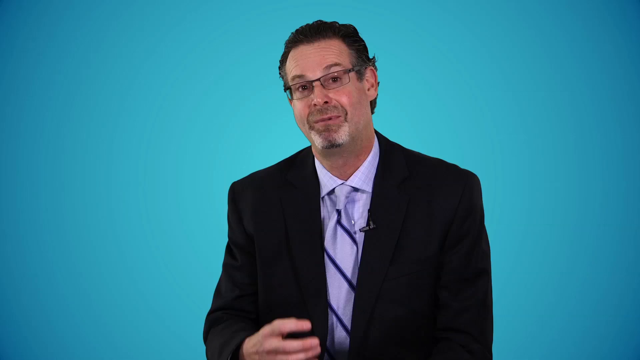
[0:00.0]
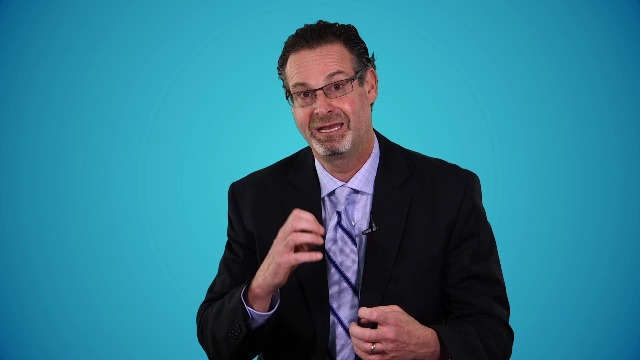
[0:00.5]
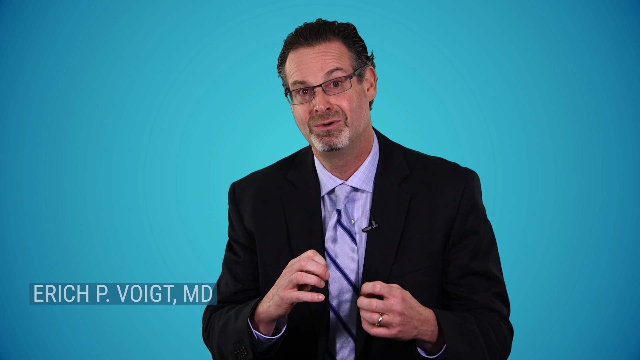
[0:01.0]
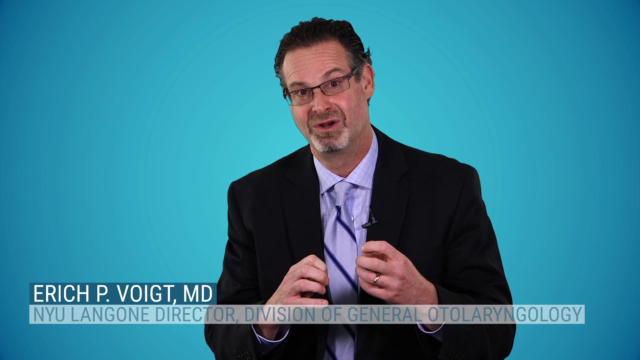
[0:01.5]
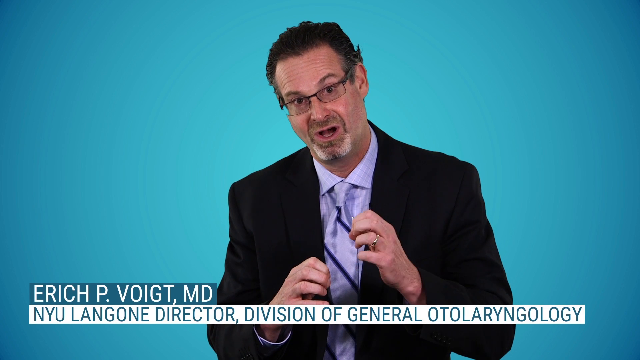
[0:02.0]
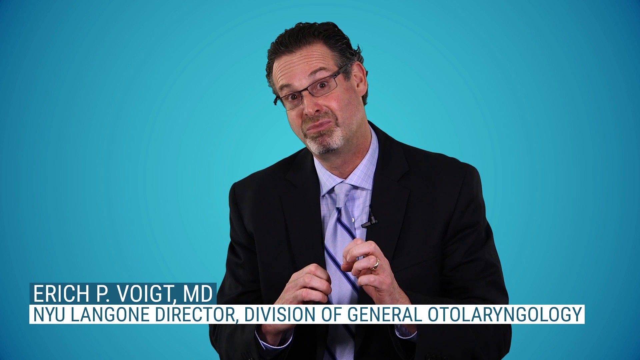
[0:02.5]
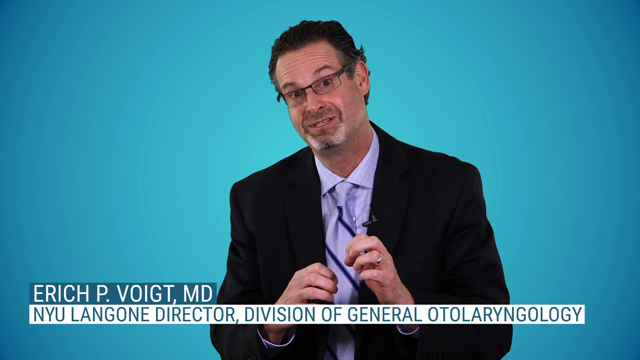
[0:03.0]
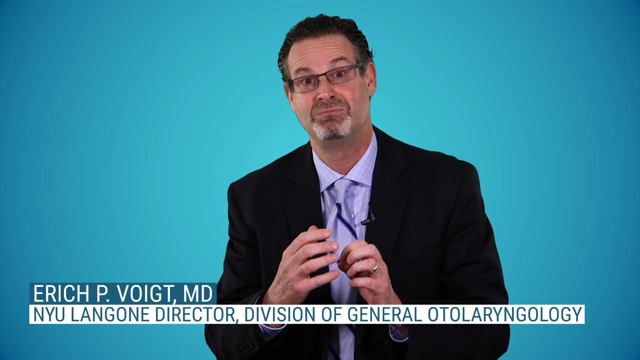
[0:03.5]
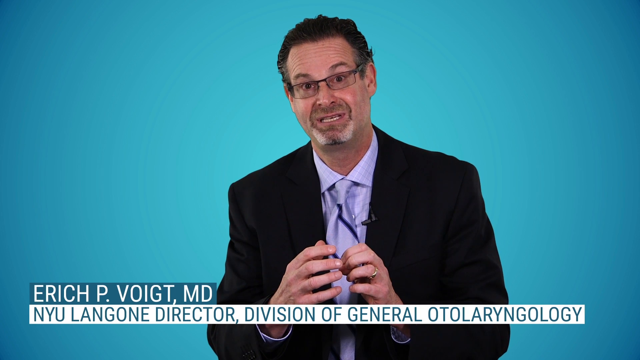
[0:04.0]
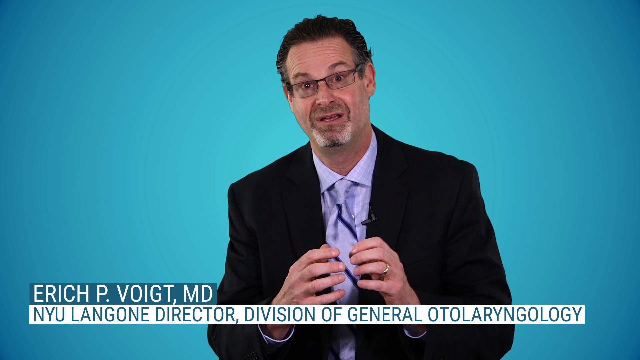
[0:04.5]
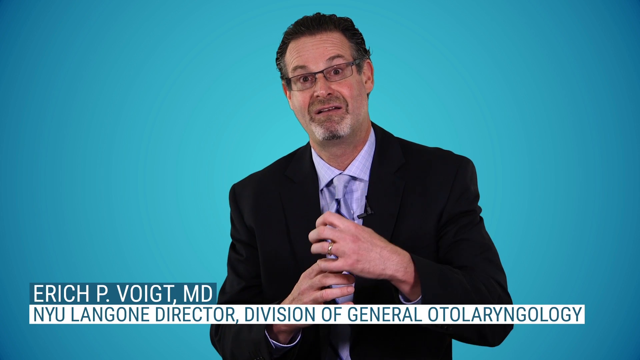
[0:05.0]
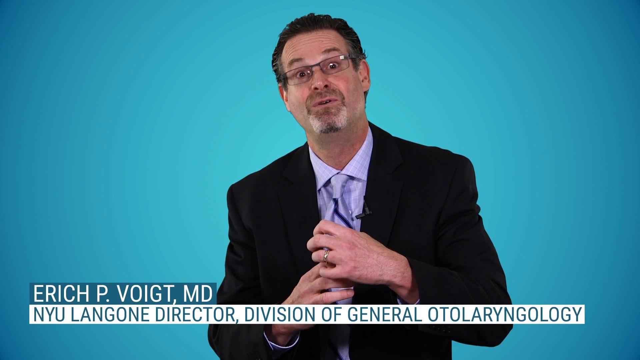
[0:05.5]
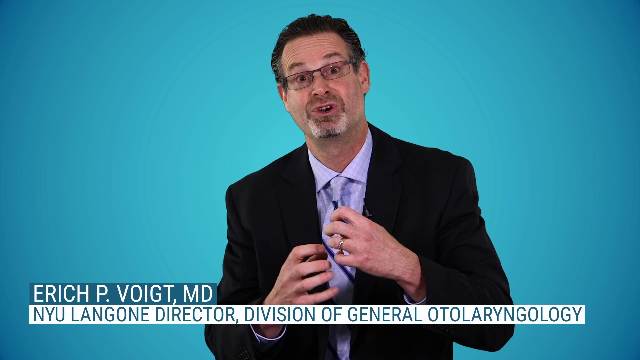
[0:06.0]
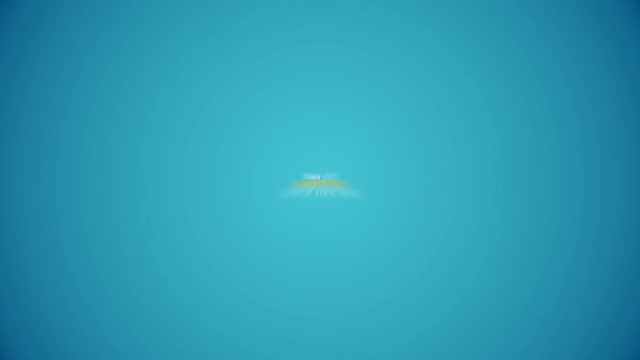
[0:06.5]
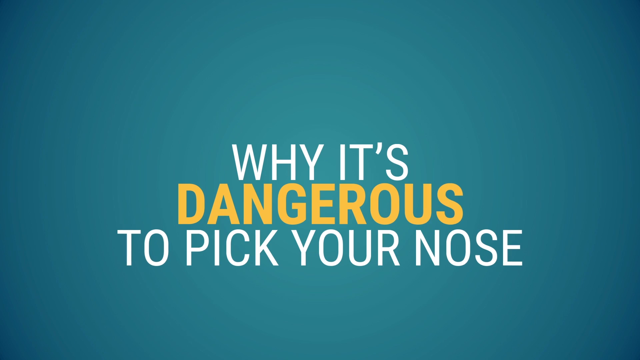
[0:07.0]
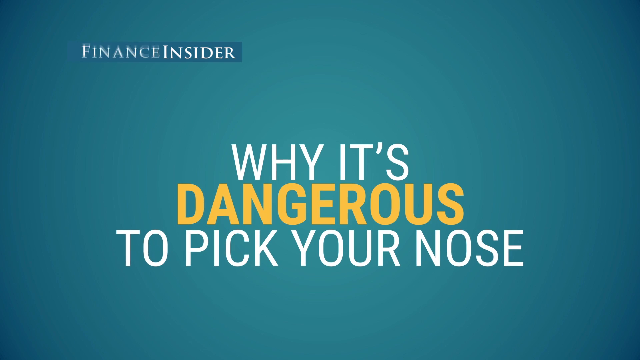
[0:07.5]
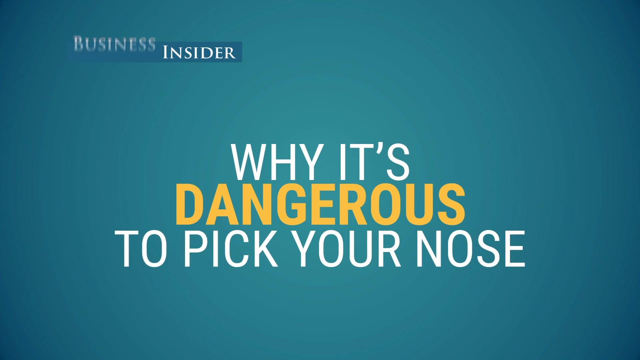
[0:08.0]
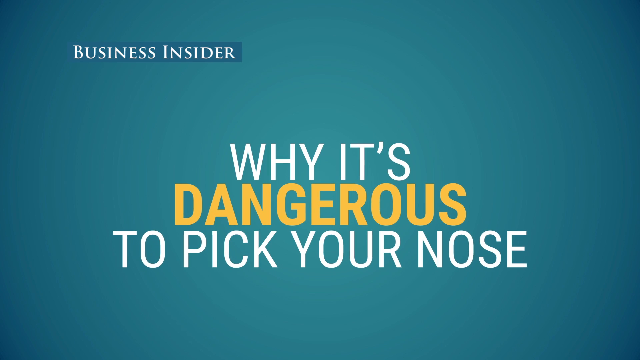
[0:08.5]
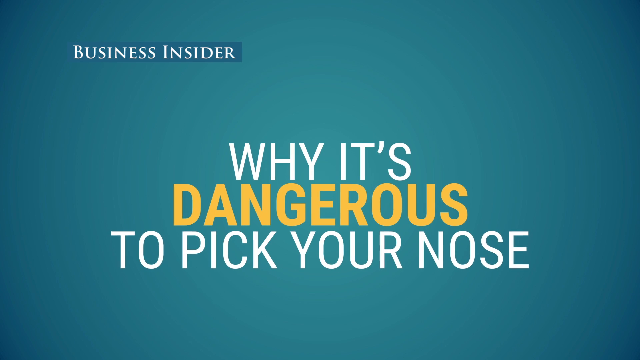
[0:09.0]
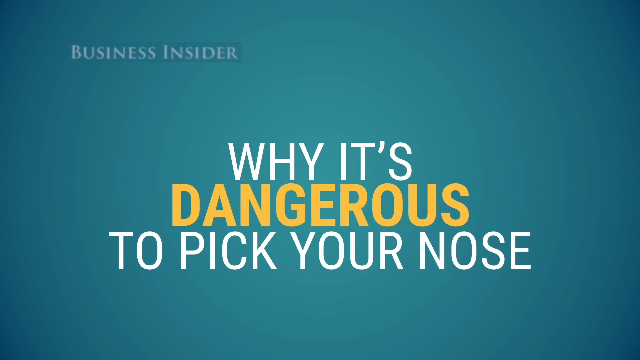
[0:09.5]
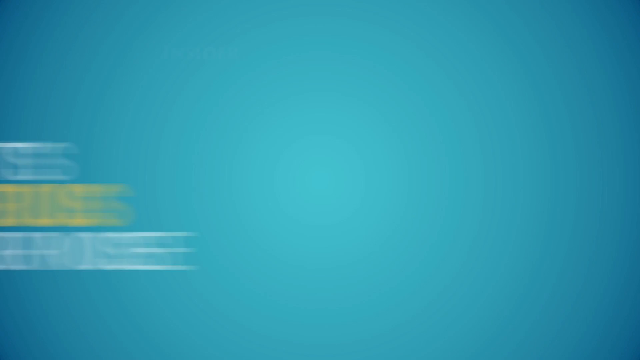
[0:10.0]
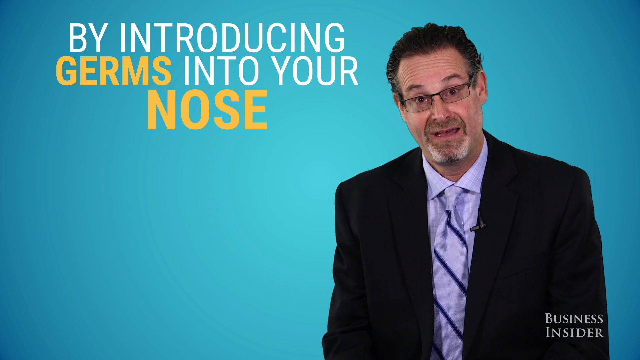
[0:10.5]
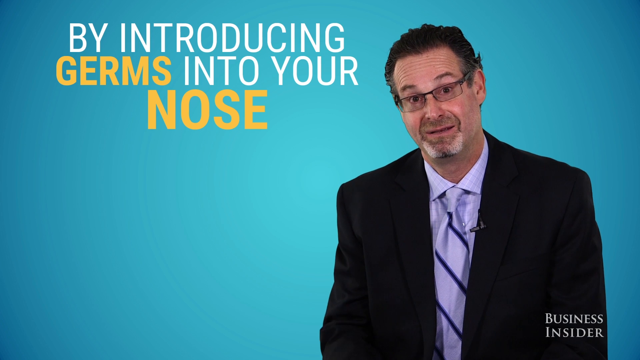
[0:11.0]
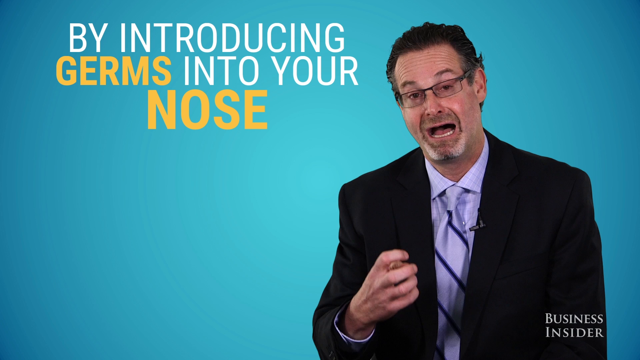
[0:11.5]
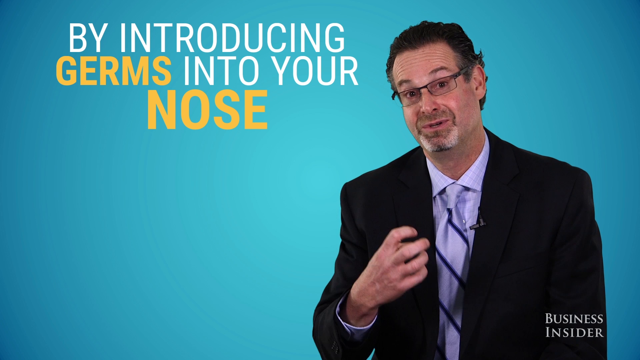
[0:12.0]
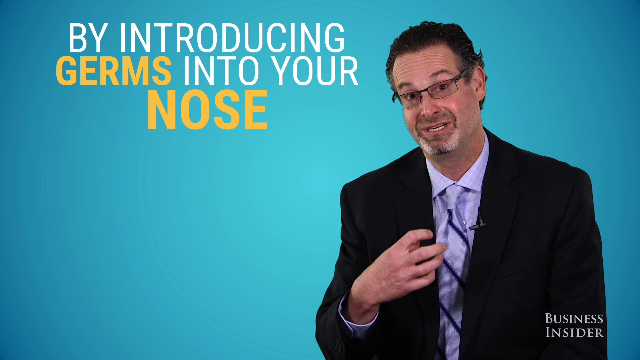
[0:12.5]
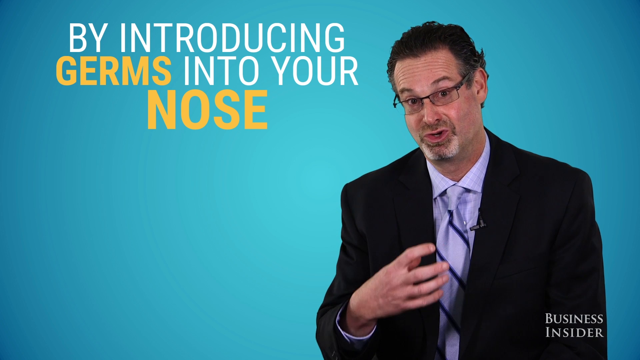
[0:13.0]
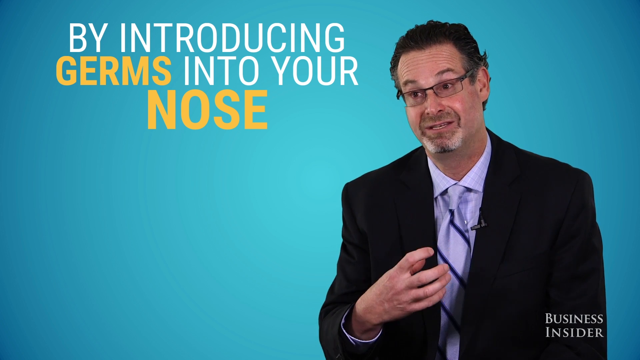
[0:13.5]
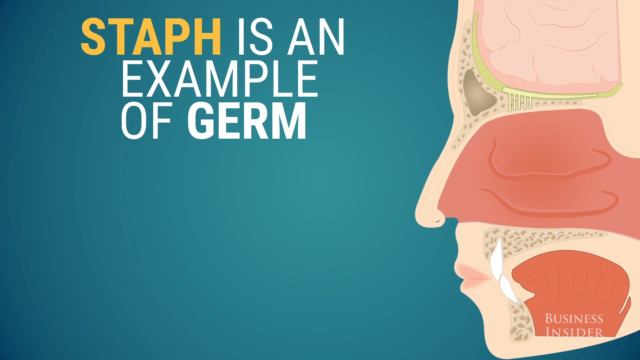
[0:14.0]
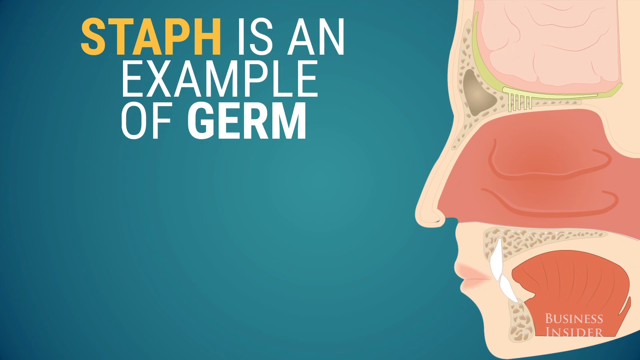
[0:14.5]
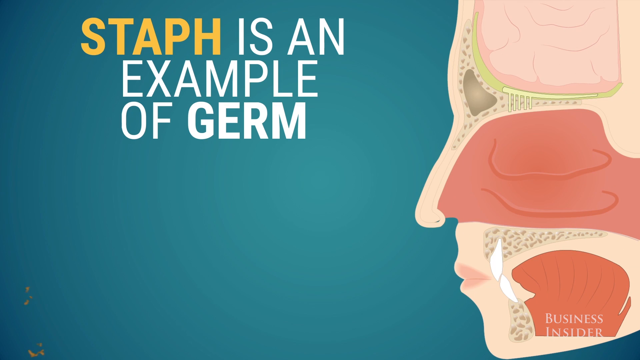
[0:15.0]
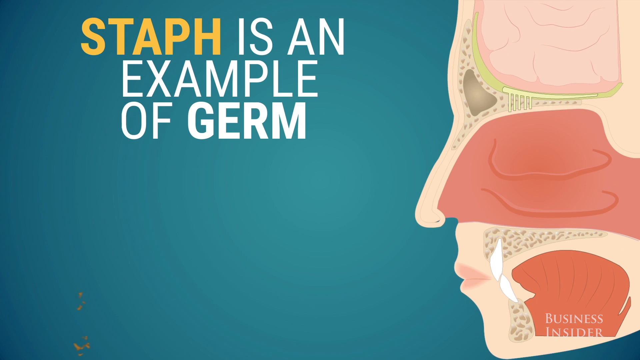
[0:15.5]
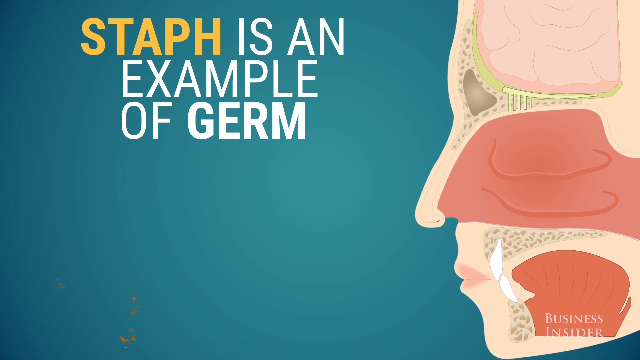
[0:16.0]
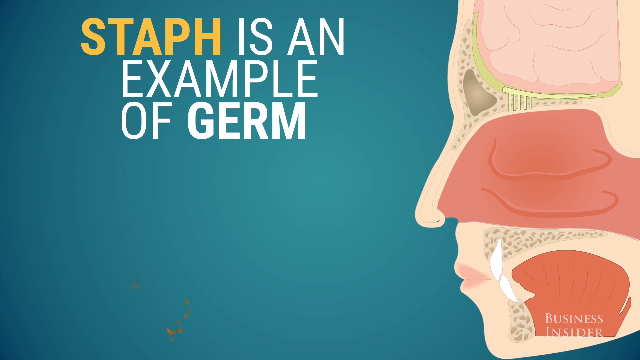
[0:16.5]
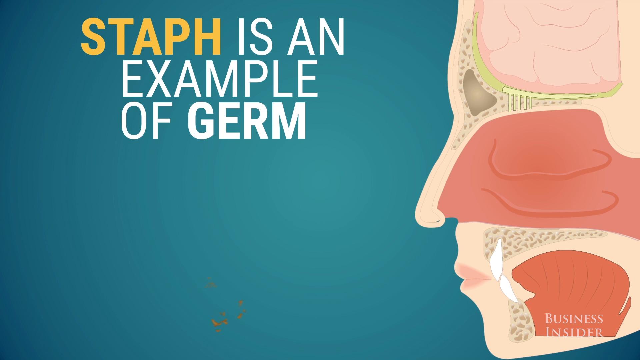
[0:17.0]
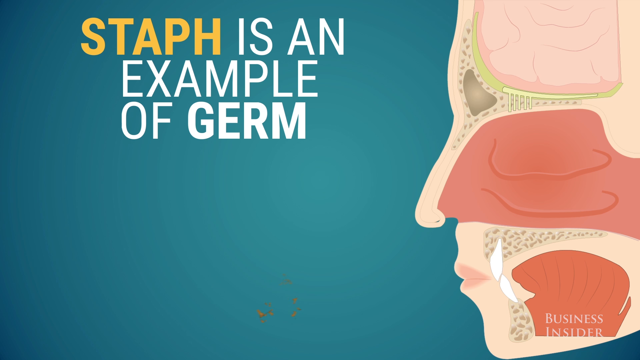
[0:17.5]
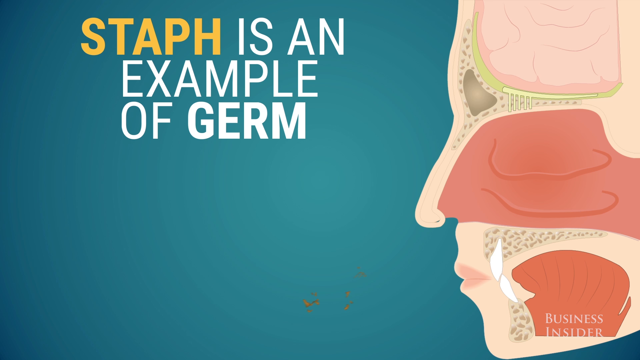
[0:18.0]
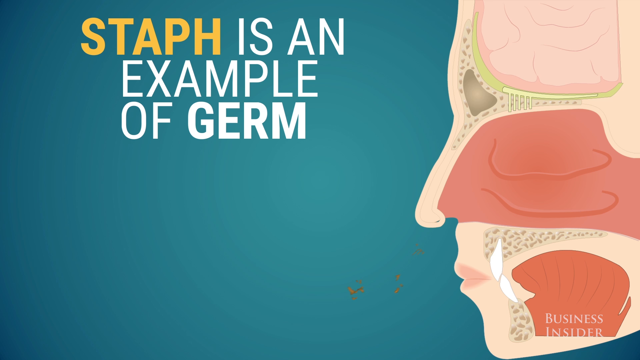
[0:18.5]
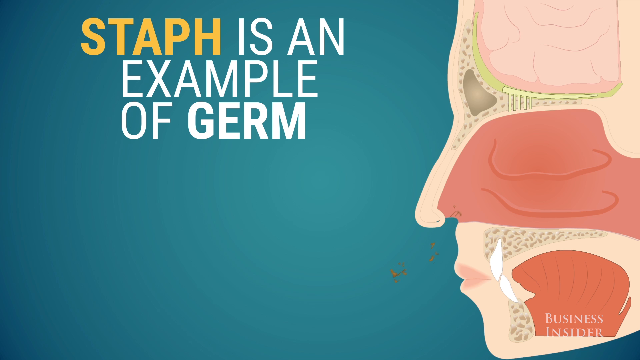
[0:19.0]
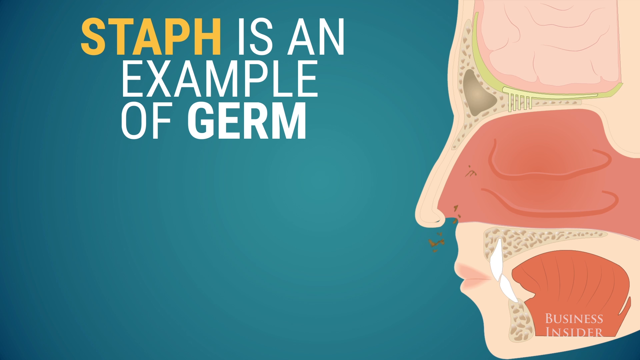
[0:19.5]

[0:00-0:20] The video opens in an interview format. A man in a business suit wears a purple or lavender shirt and a purple tie with black stripes. He has a goatee with gray in it and black hair that is most likely dyed, and he wears square-ish rectangular glasses. A microphone is clipped to his suit coat, and a golden wedding ring is on his left hand. Text identifies him as "Eric P. Boyd, MD," and beneath that reads "NYU Langone Director, Division of General Otolaryngology." The video then shows that it is from Insider, with on-screen text reading "why it's dangerous to pick your nose," all in white except "dangerous," which is yellow. Next, text reads "by introducing germs into your nose," with "germs" and "nose" in yellow and the rest in white. A Business Insider logo is in the bottom right, while the interviewer is back on the right with the text on his left. Finally, text reads "staph is an example of germ," with "staph" in yellow, the rest in white, and "germ" in a different font. On the right is a muscular-type image showing a side 3D view of a human face, with the inside of the nose visible.